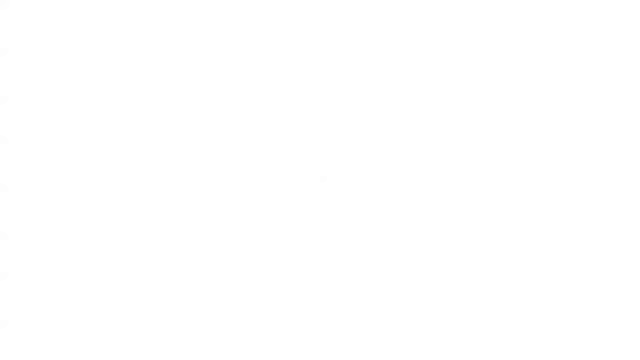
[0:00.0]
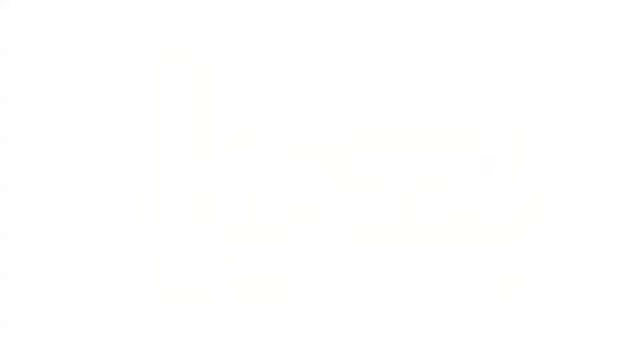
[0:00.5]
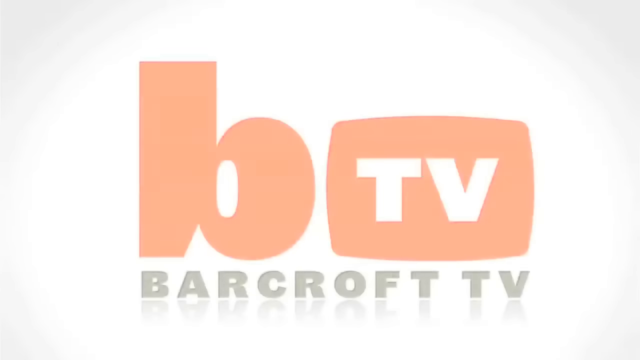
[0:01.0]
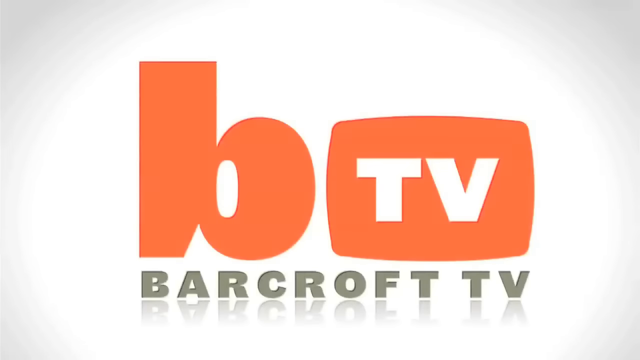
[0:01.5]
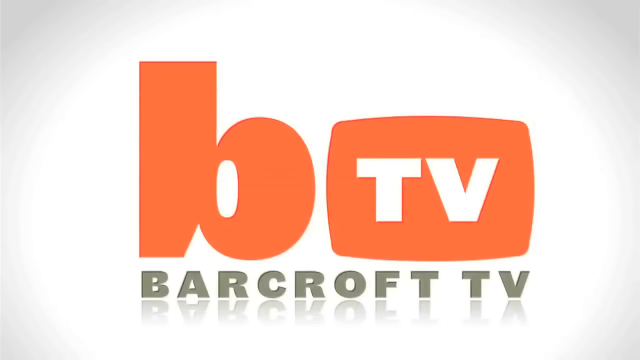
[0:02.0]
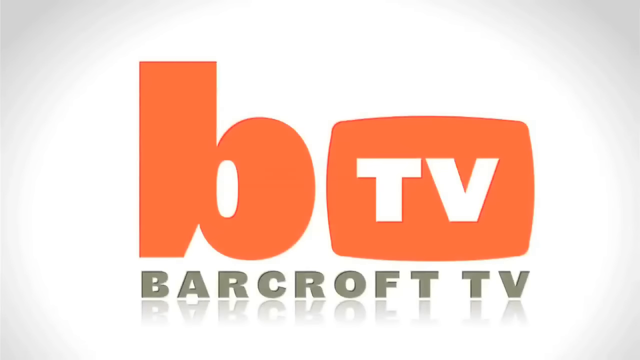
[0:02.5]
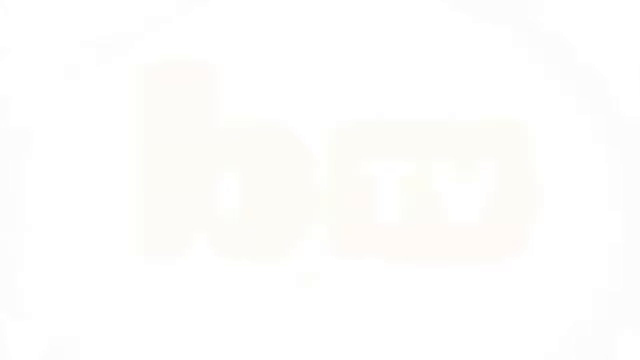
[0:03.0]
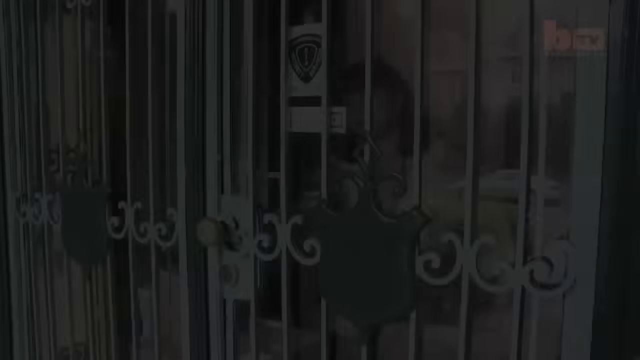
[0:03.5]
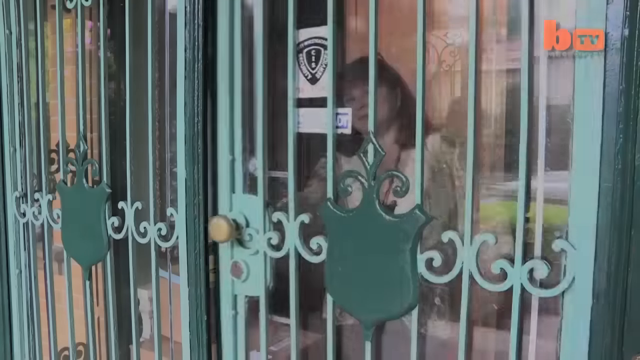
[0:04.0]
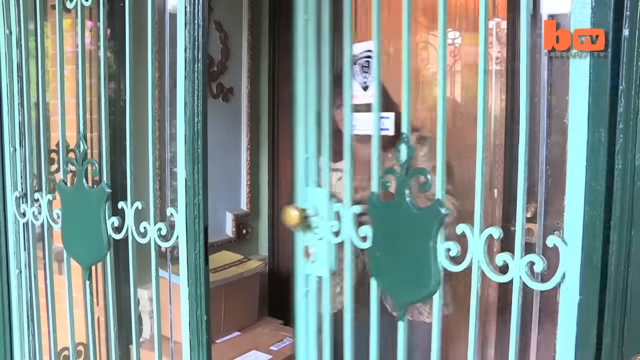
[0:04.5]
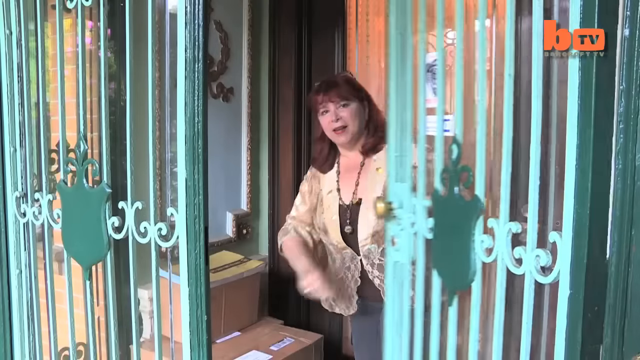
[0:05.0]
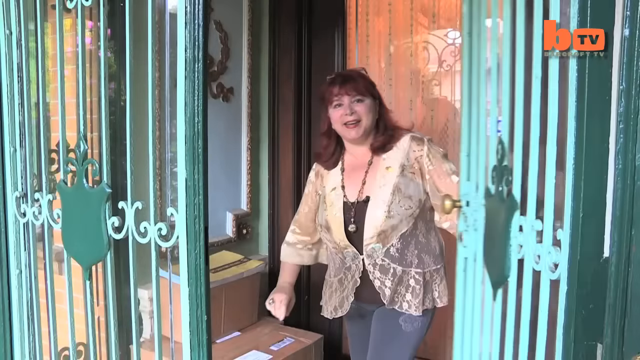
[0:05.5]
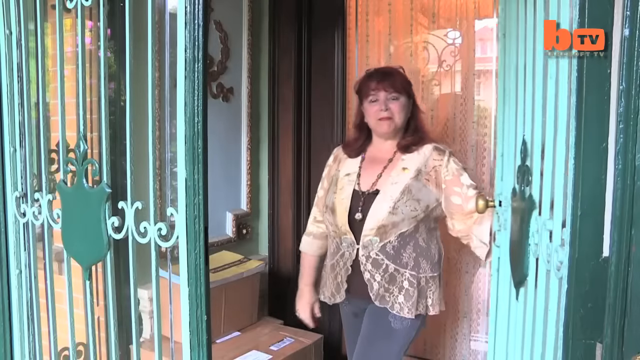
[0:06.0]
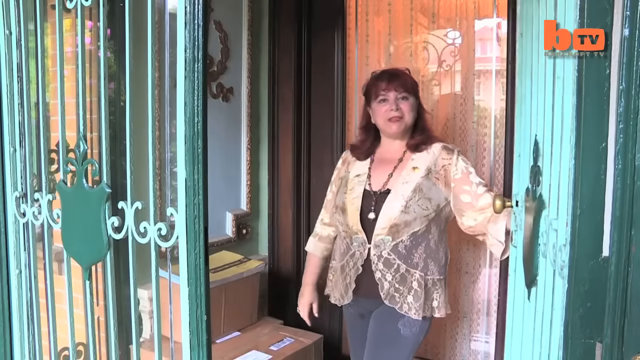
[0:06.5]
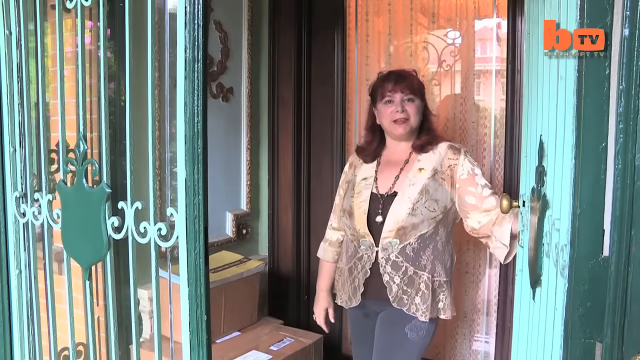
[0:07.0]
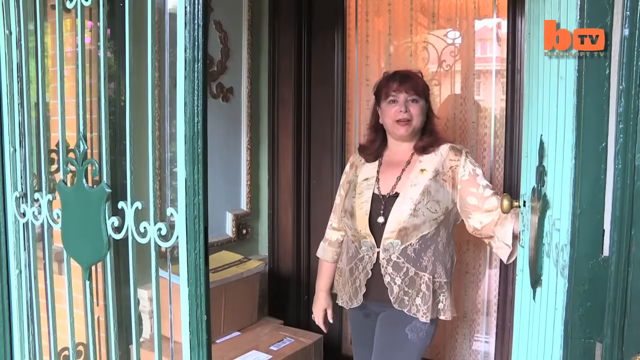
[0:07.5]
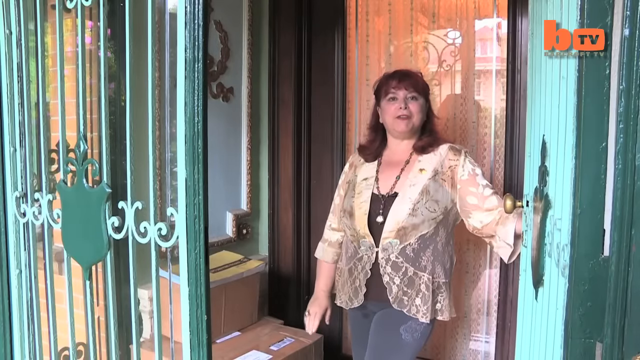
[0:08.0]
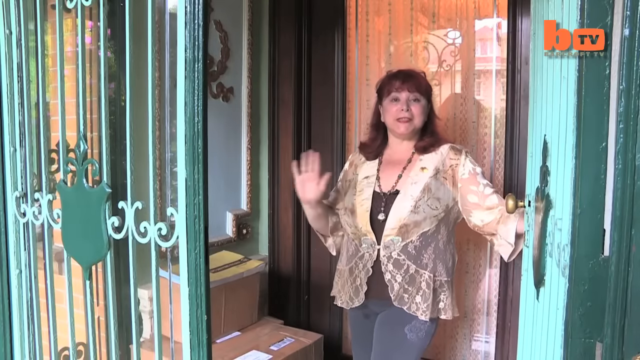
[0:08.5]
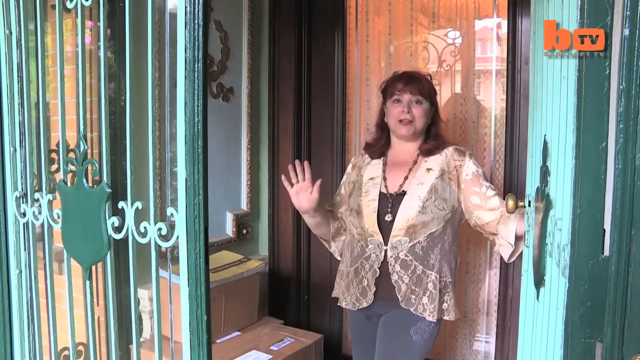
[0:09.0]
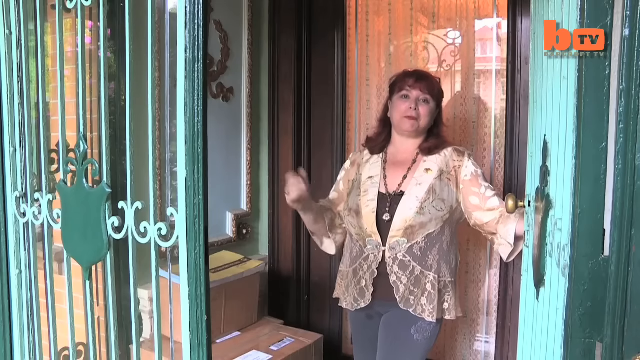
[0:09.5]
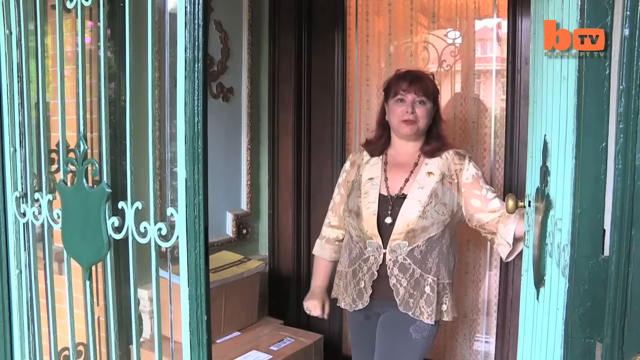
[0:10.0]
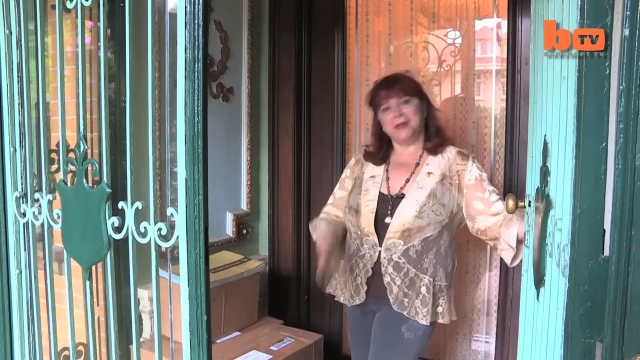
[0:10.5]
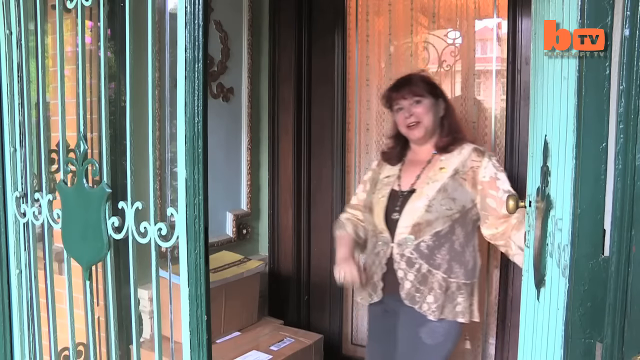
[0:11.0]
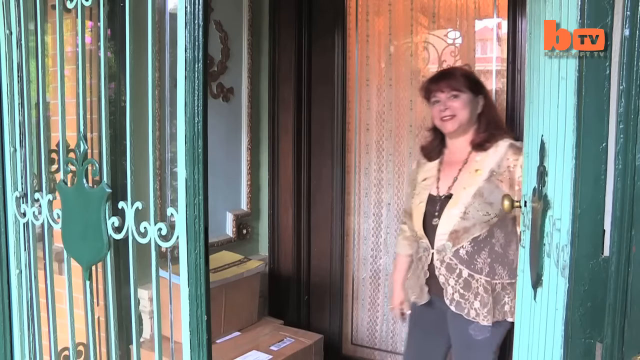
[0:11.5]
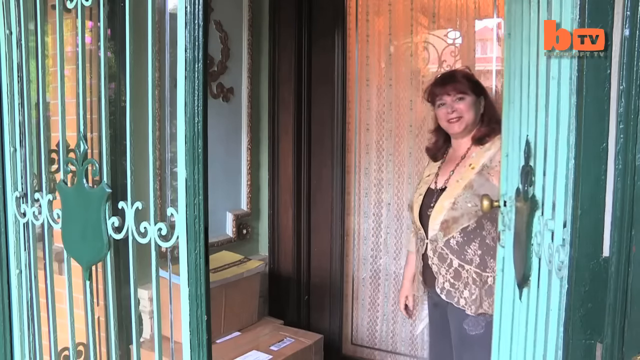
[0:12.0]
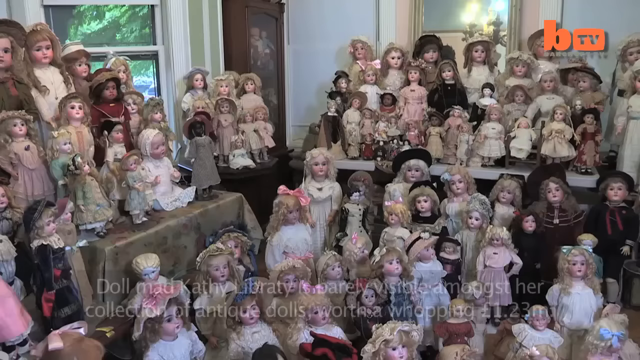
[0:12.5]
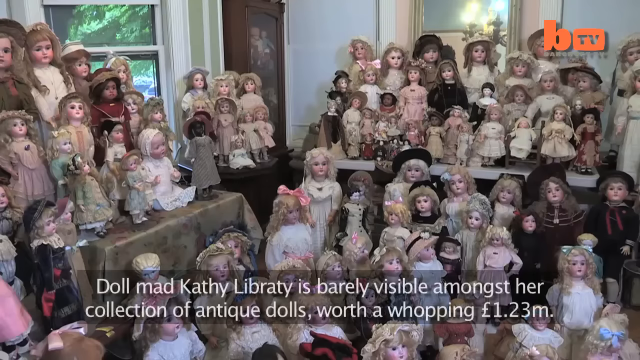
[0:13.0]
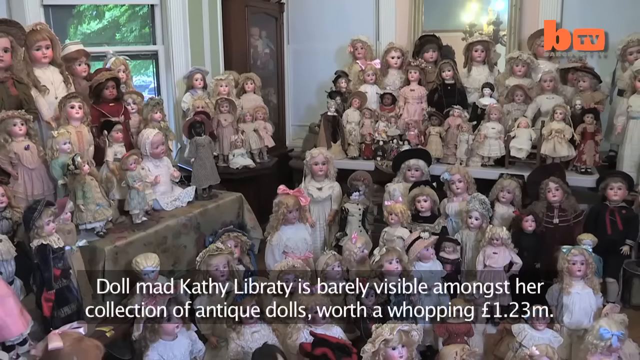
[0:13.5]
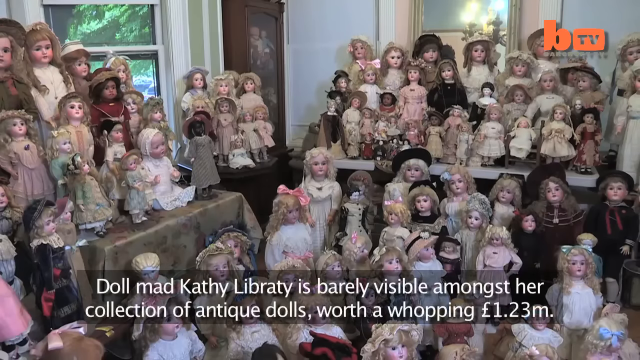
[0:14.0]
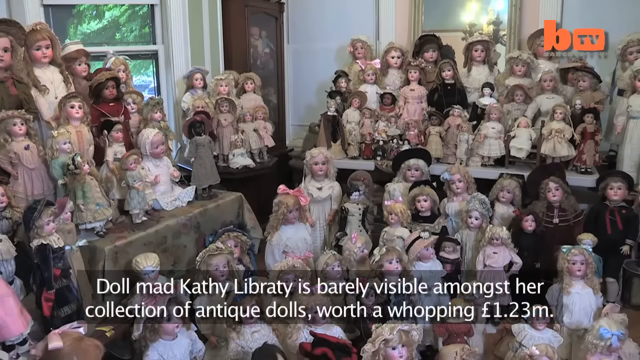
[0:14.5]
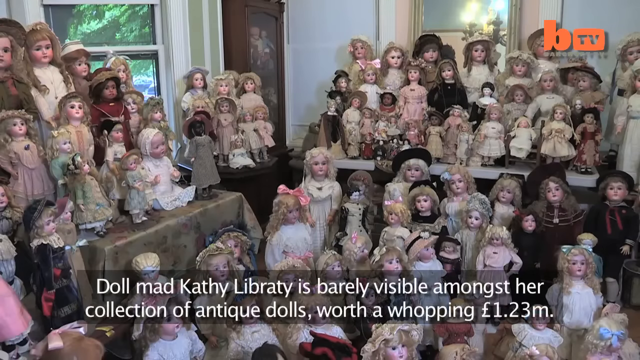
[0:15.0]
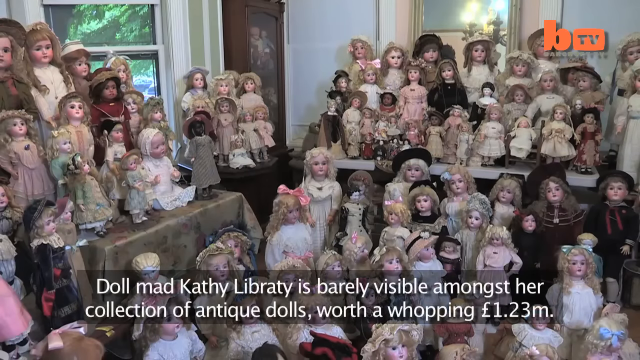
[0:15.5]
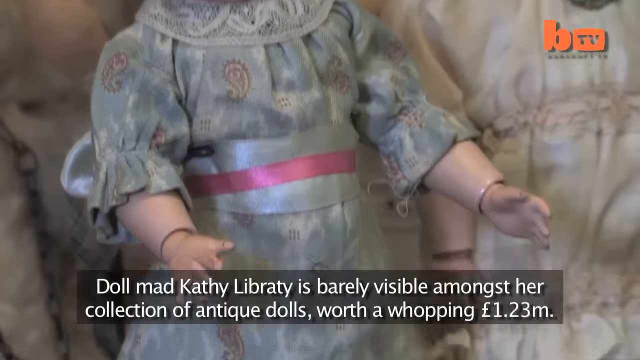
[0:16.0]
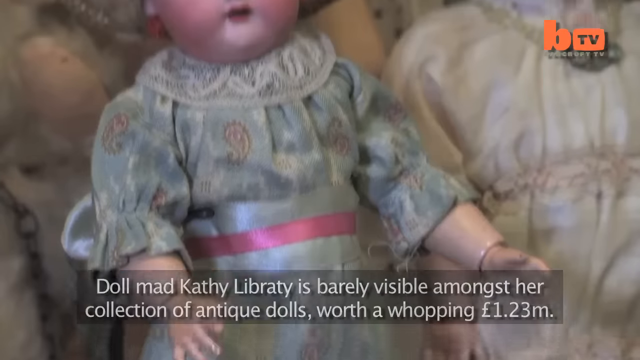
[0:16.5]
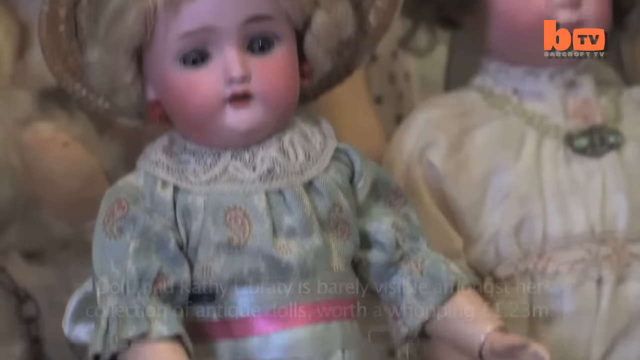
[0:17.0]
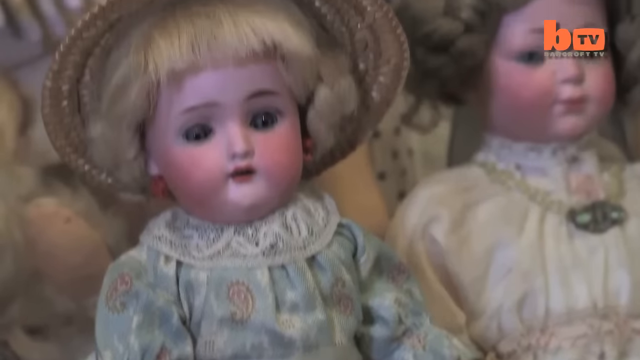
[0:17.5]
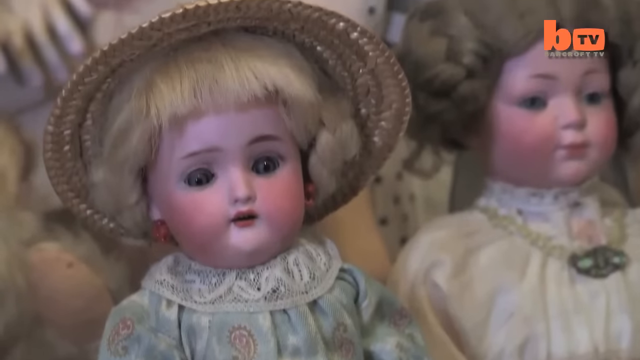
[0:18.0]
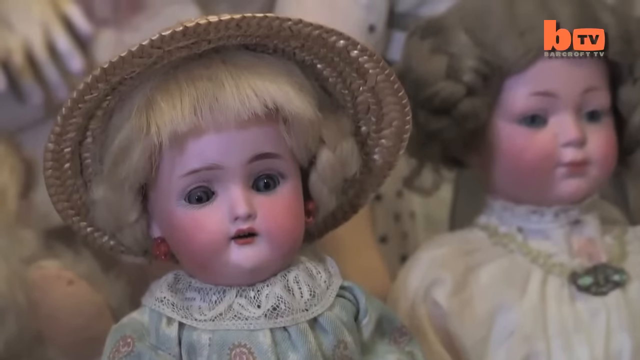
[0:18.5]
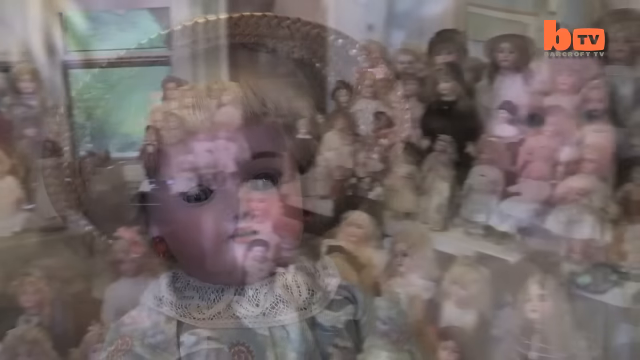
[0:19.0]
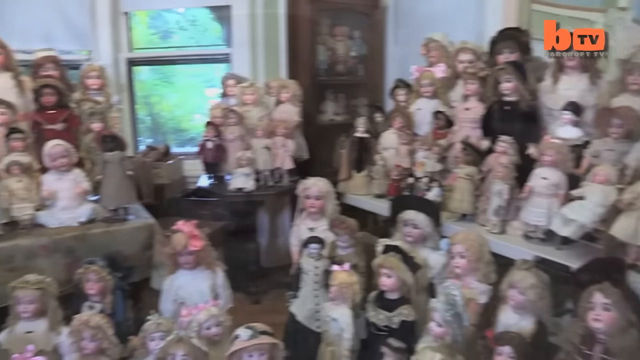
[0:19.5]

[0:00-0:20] An introductory logo opens the video: on the left is a lowercase orange "b", and next to it on the right is an orange square with "TV" in white in the center. Below that, "BARCROFT TV" appears in capital letters in dark gray. The background is white and light in the center but more of a silver color at the top and bottom. The next scene shows a woman opening a door and standing in the doorway. The door, on the right-hand side, is open and looks mostly light blue, with a dark teal frame. The woman wears a necklace, has medium-length dark brown hair, and is talking; her right hand waves while her left hand opens the door. Next, a very large doll collection is shown, with the dolls presented in rows, one behind another, on the left-hand and right-hand sides. White text reads "Kathy Liberty is barely visible among her collection of antique dolls, worth a whopping €1.23M". A light blue circle in the bottom right corner says "Truly".